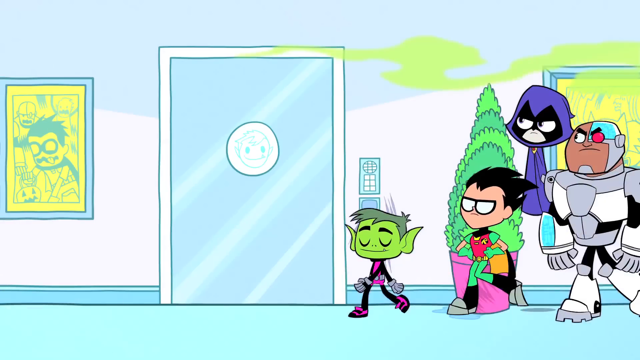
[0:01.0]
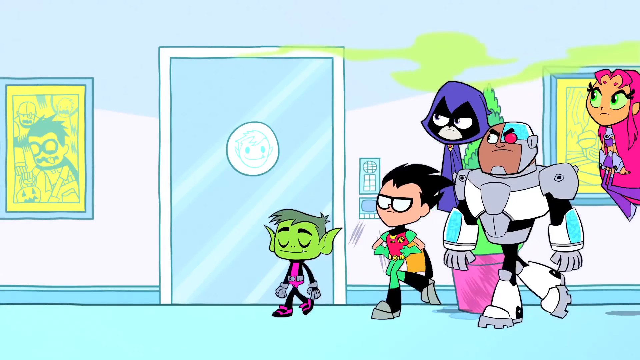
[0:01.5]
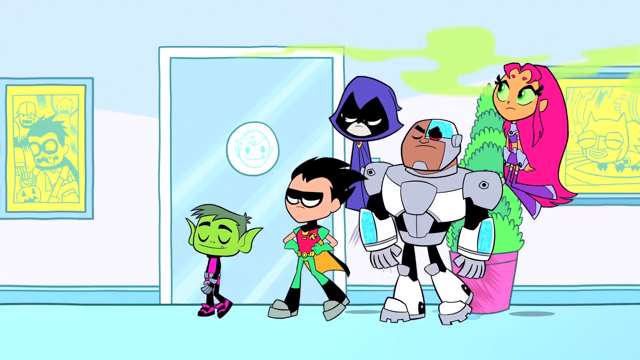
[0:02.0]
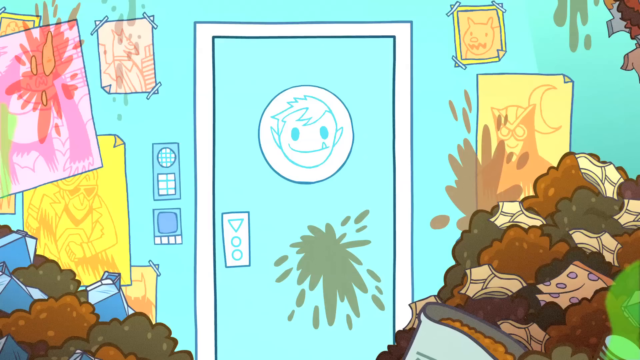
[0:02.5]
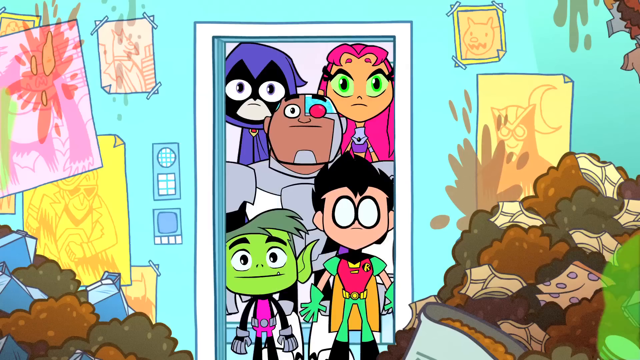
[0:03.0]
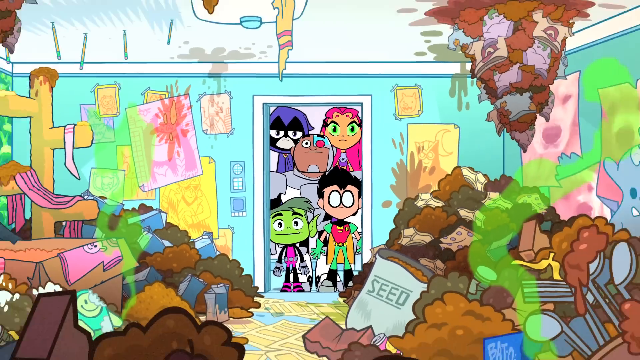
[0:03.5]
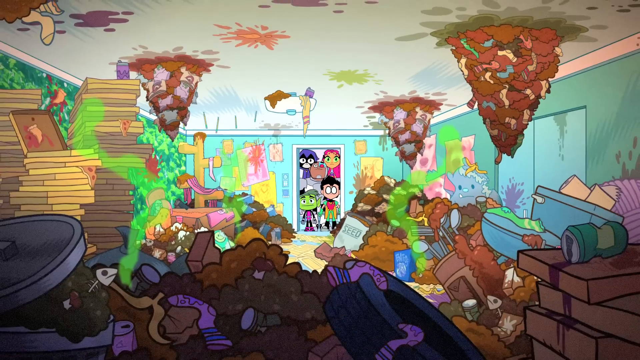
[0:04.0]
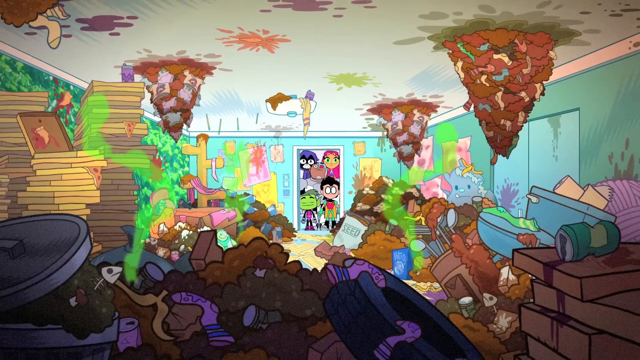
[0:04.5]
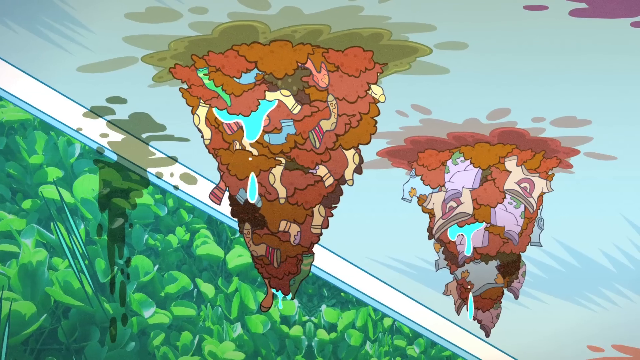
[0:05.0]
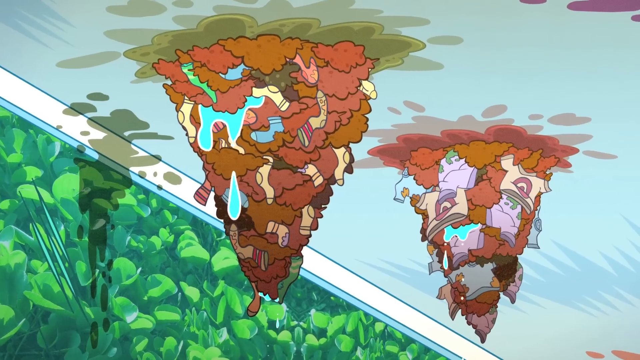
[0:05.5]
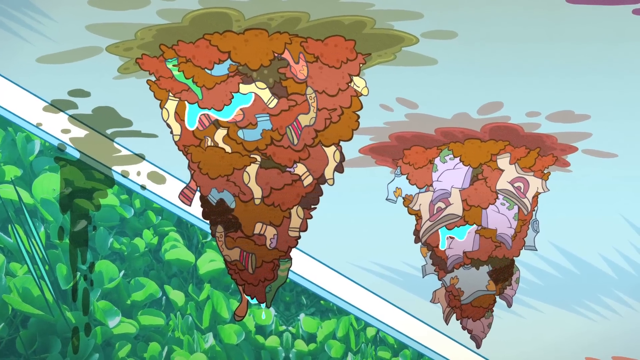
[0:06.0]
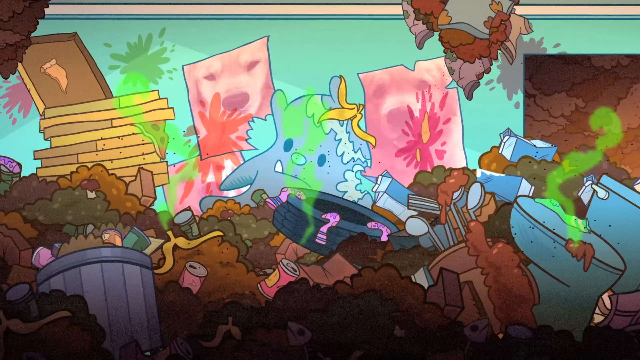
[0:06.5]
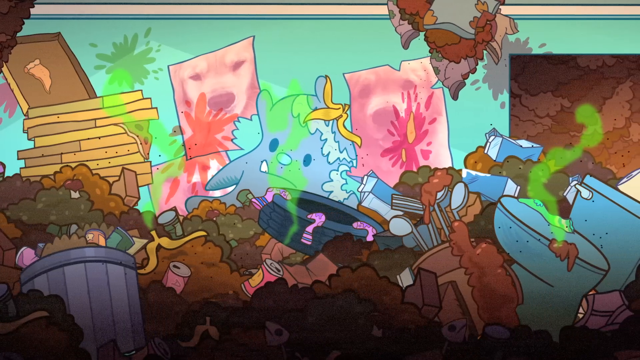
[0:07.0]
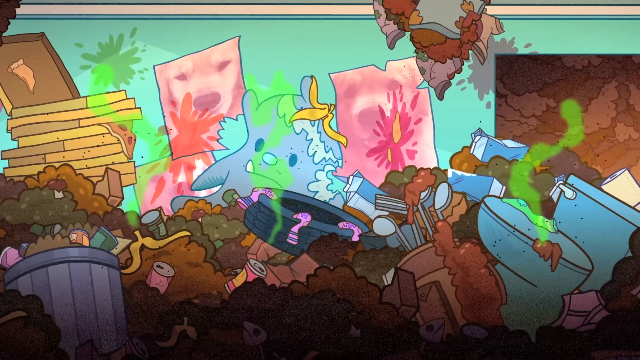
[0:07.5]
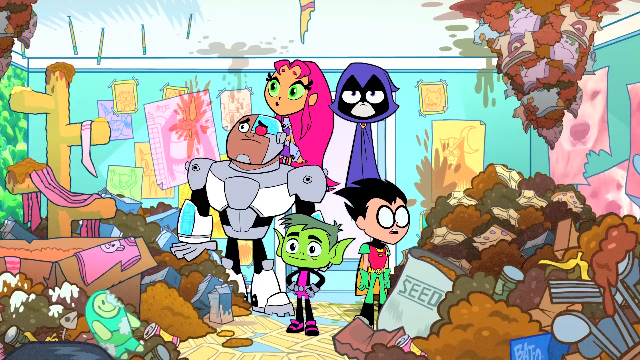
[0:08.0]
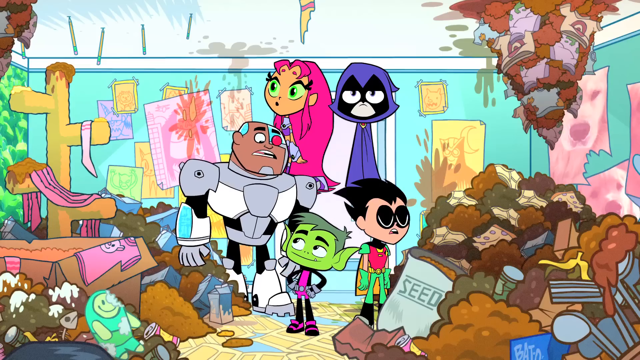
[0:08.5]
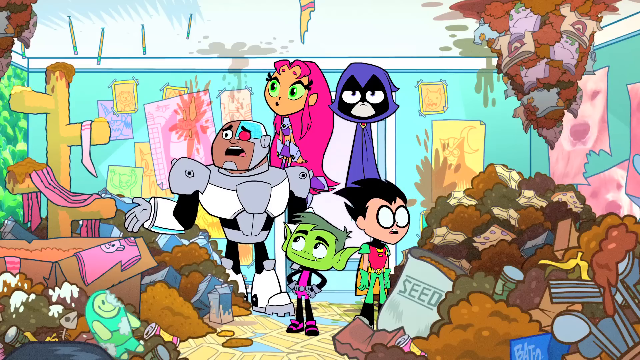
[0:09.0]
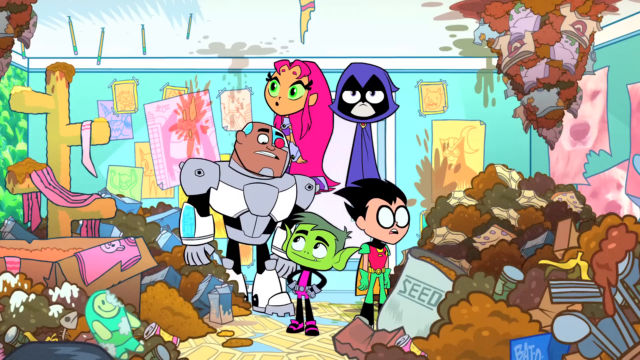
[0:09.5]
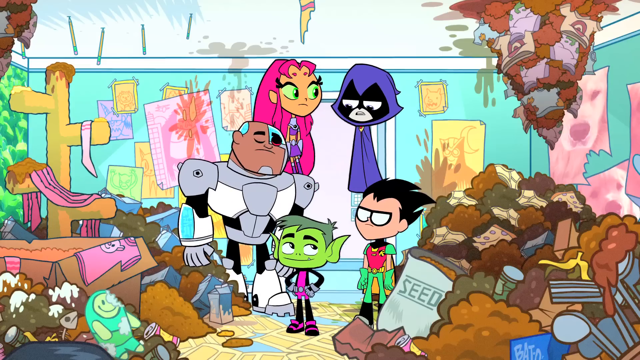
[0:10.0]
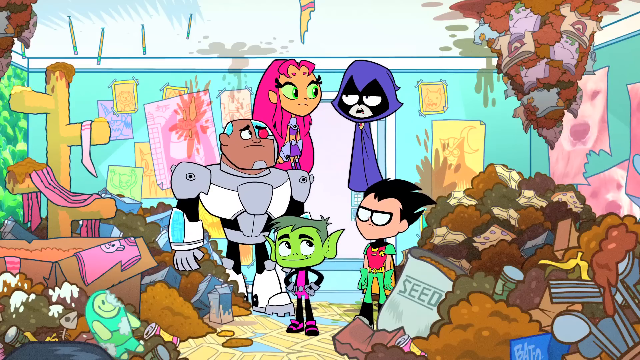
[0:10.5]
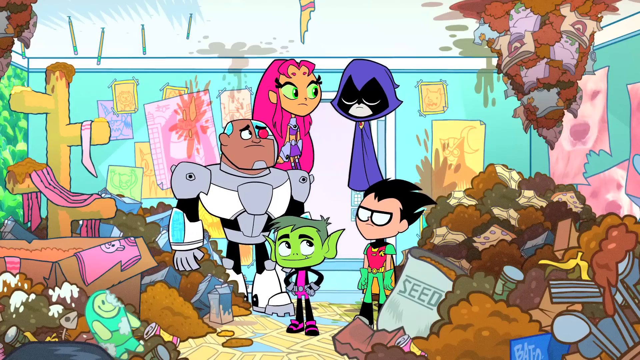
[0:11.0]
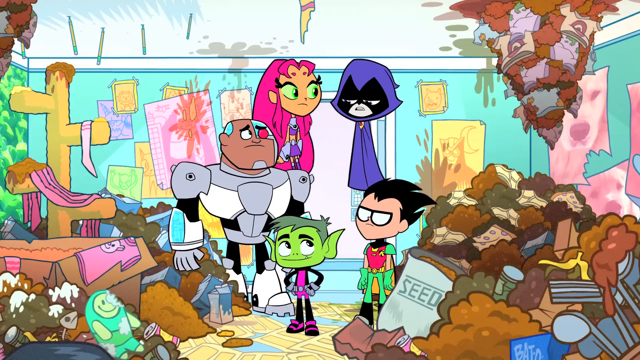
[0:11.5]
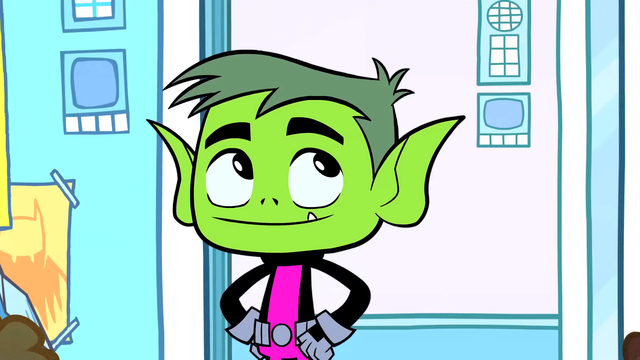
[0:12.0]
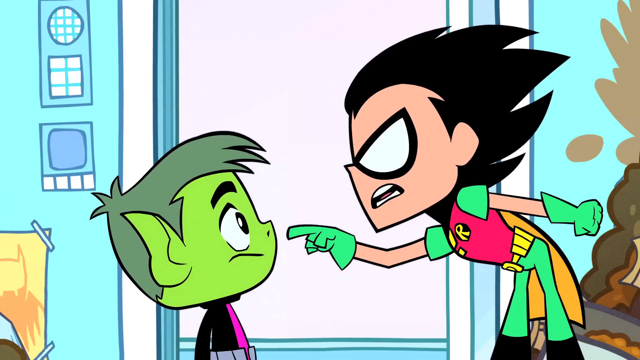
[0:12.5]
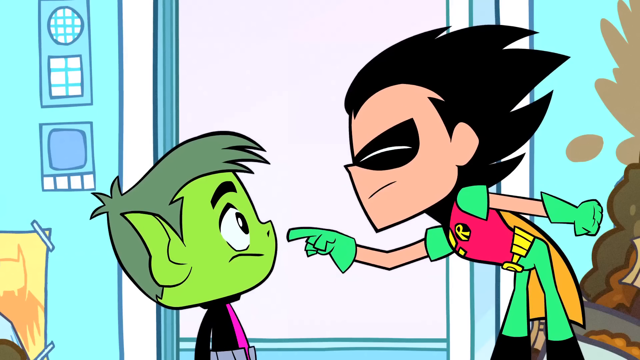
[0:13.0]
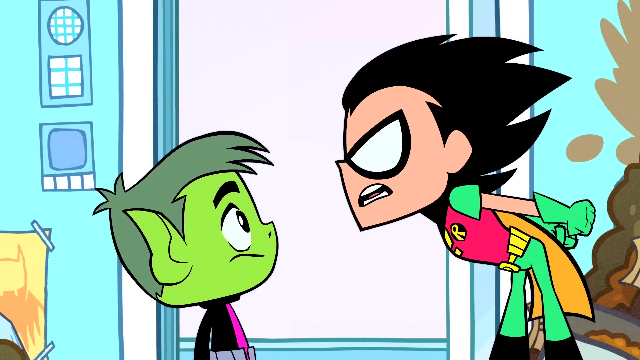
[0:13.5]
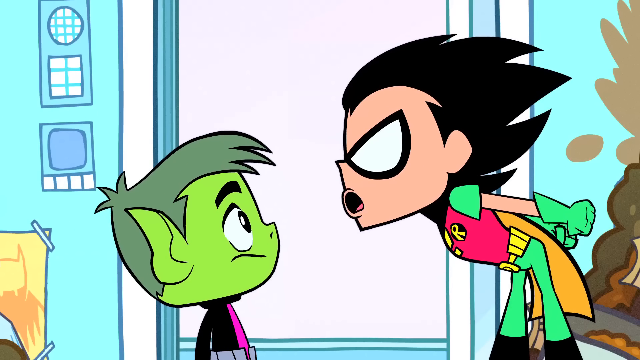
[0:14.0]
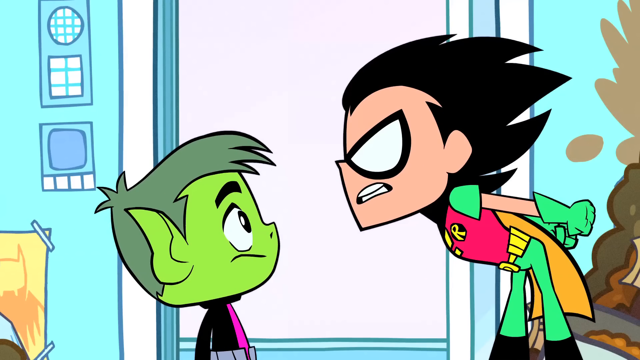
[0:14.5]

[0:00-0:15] This is a clip from the Teen Titans Go! television show, animated in a somewhat cartoon/comic book style aimed at kids, with very bright, vivid coloring. It starts in a very bright hallway with white walls, blue flooring and blue doors that have a clean look. The characters from the show, Beast Boy, Robin, Raven, Cyborg and Starfire, all seem to walk into the scene, each with their own unique look. They then appear to open a door onto a very filthy, dirty environment with piled-up pizza boxes, trash, manure and a toilet. The mess is piled all over the ground and also hangs down from the ceiling, with piles of mud mixed with socks, all dripping and looking very grotesque. The smell is even visualized as a green, mist-like haze coming off of everything.